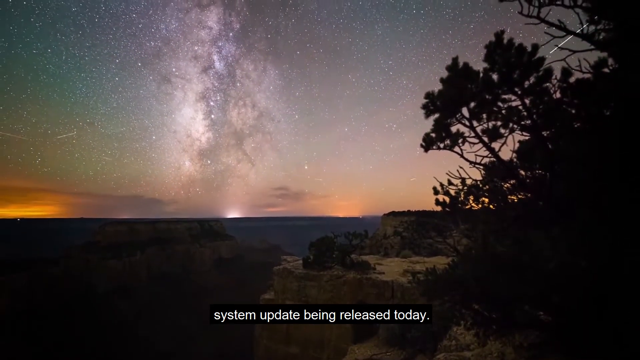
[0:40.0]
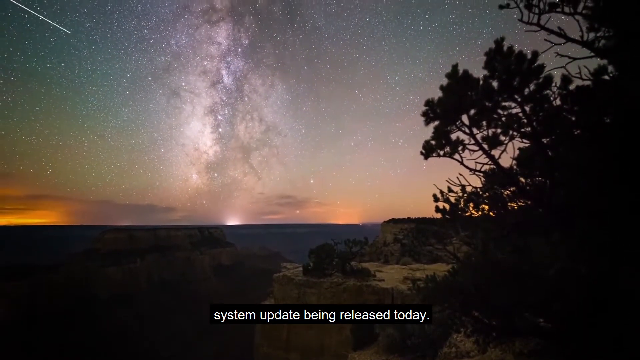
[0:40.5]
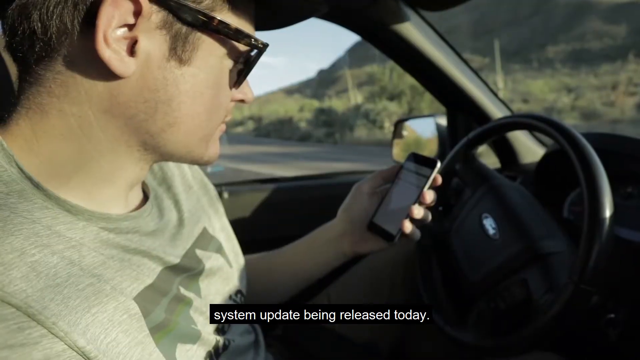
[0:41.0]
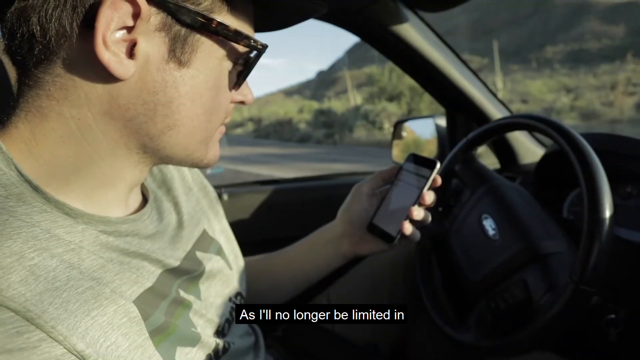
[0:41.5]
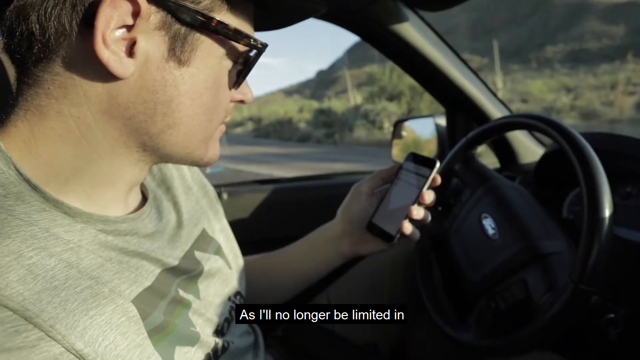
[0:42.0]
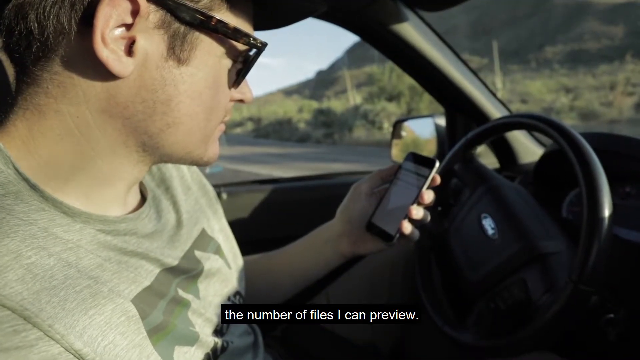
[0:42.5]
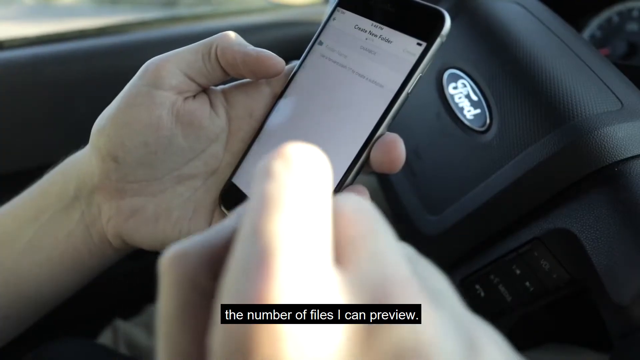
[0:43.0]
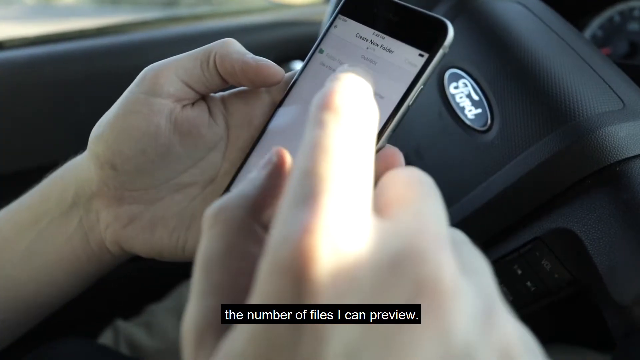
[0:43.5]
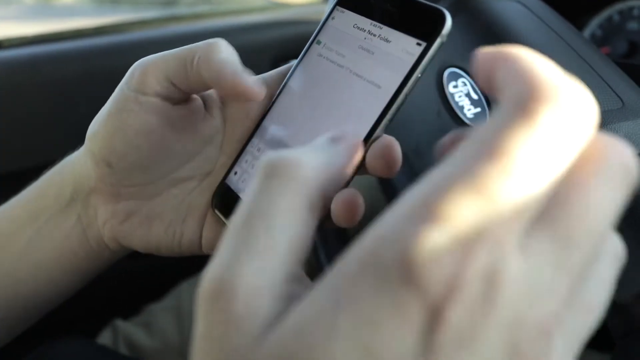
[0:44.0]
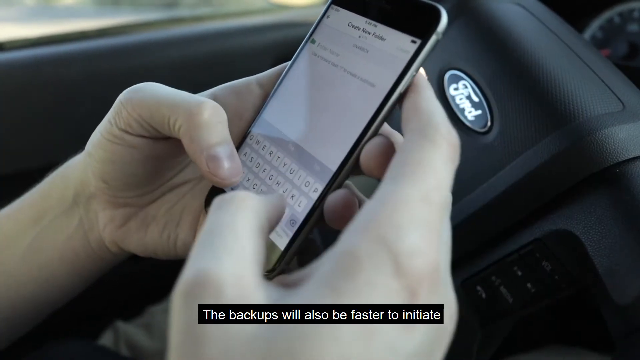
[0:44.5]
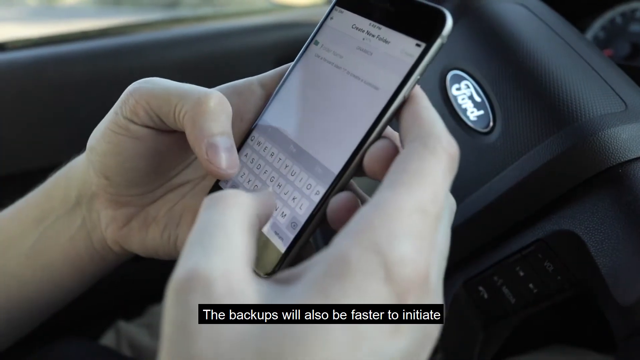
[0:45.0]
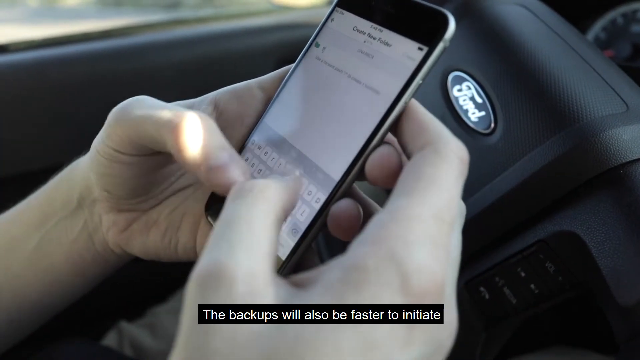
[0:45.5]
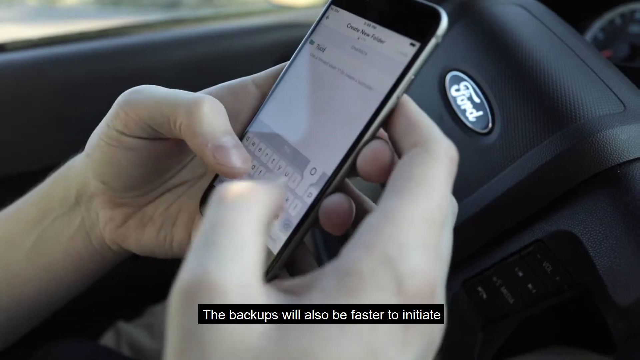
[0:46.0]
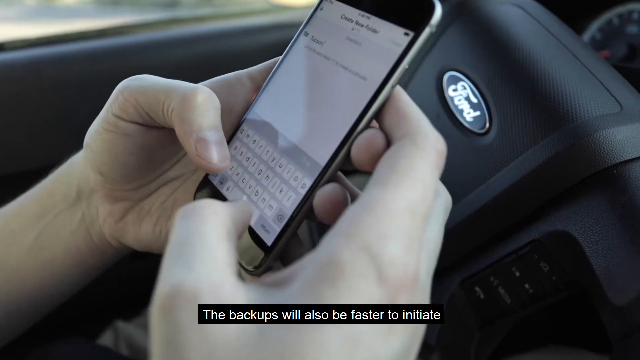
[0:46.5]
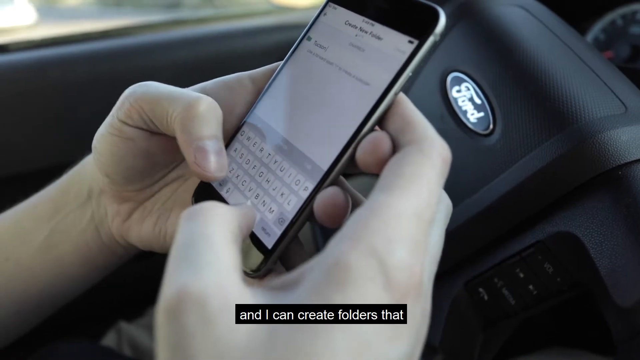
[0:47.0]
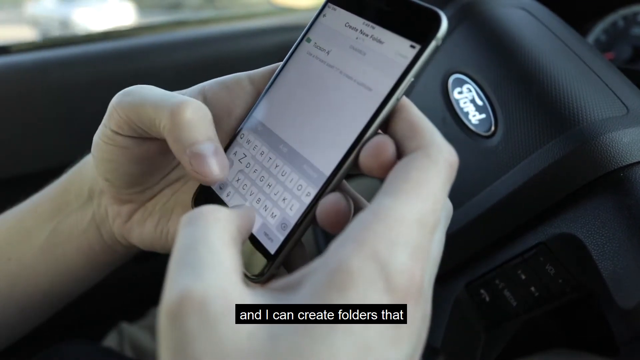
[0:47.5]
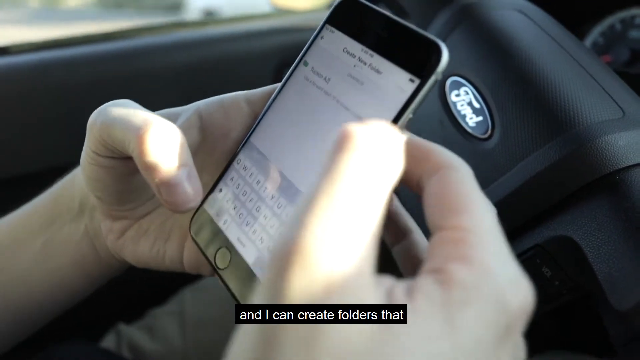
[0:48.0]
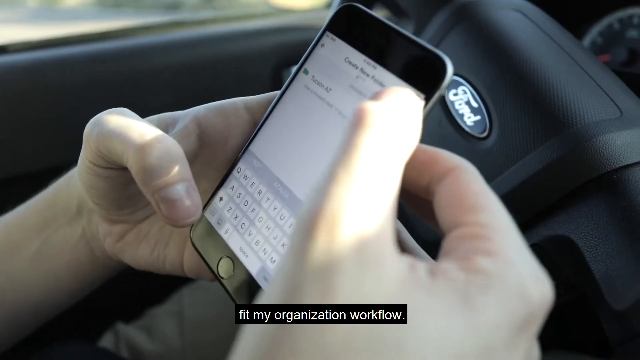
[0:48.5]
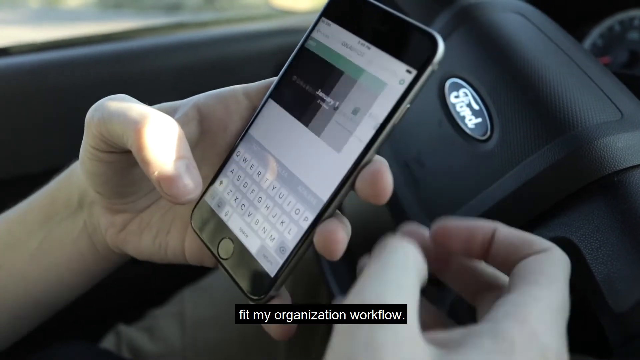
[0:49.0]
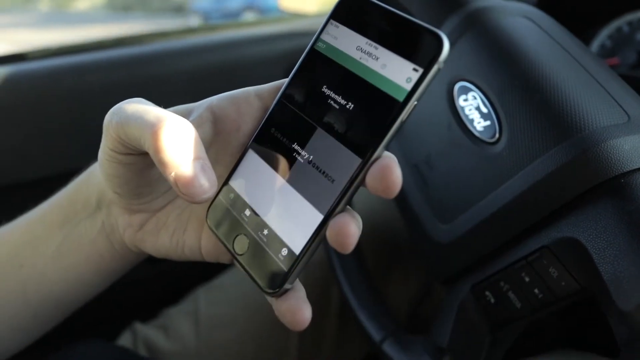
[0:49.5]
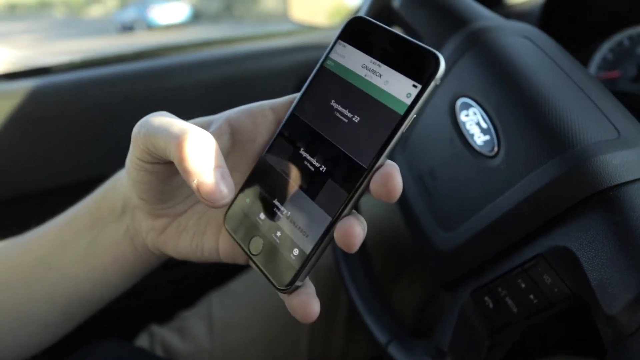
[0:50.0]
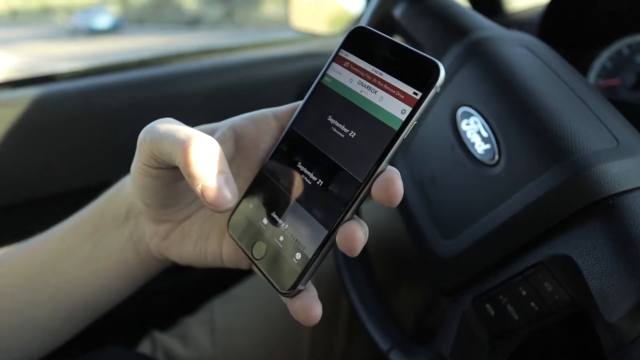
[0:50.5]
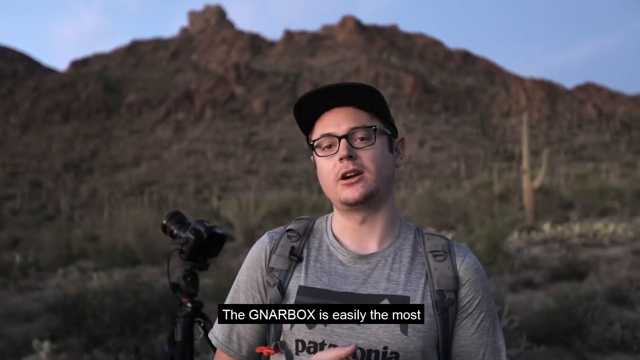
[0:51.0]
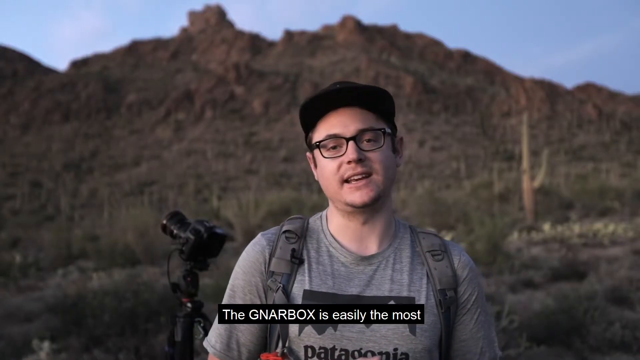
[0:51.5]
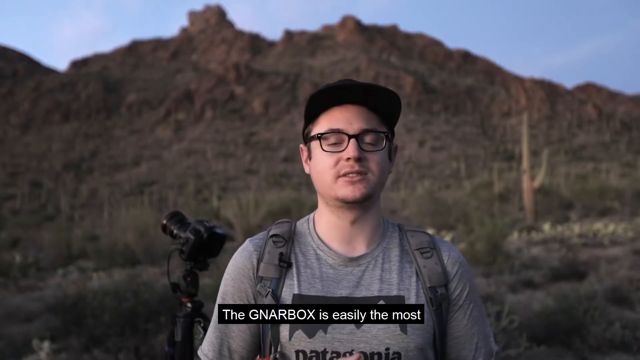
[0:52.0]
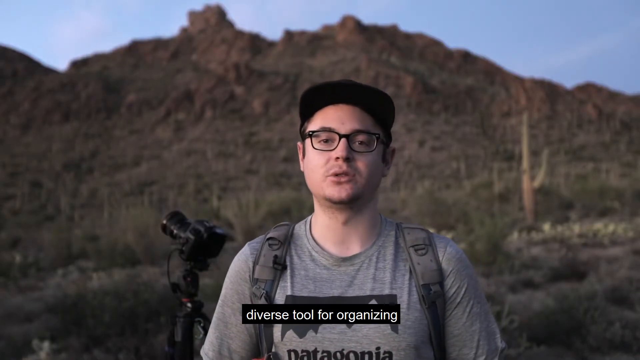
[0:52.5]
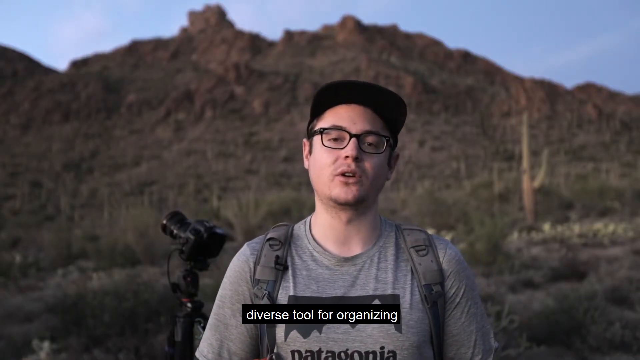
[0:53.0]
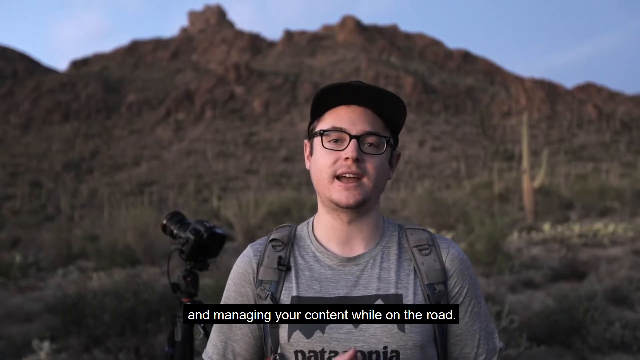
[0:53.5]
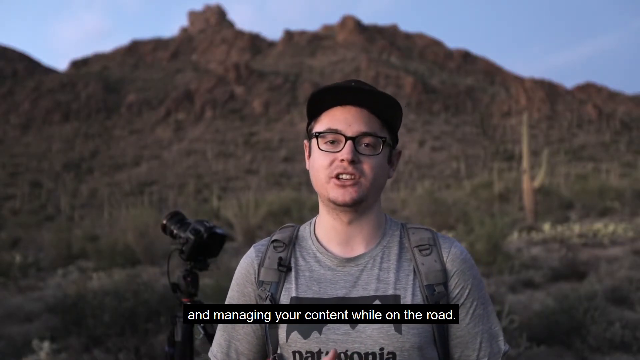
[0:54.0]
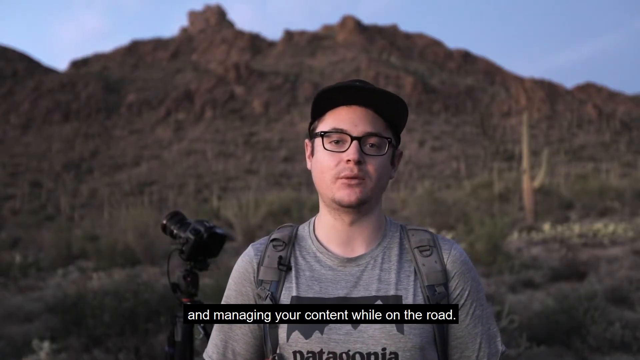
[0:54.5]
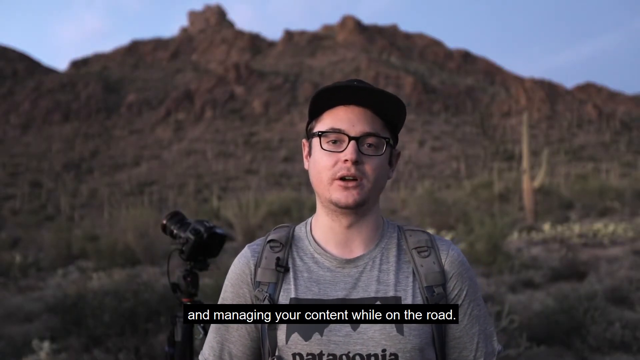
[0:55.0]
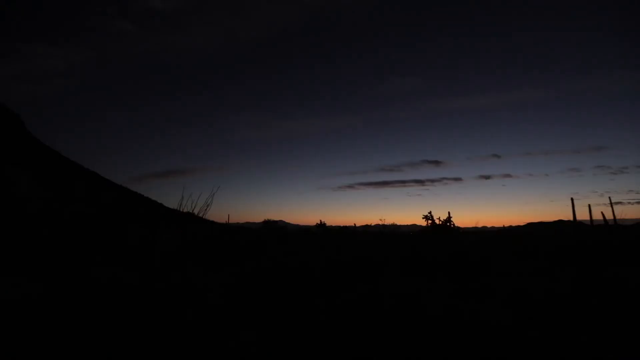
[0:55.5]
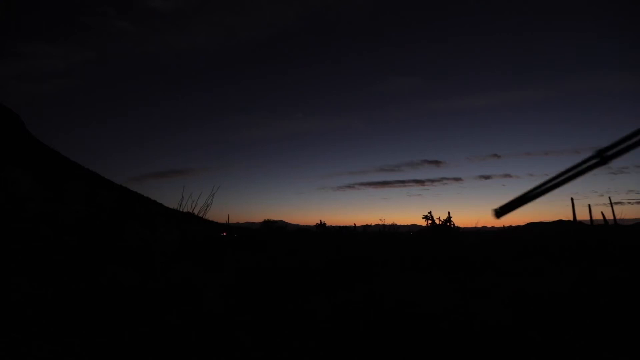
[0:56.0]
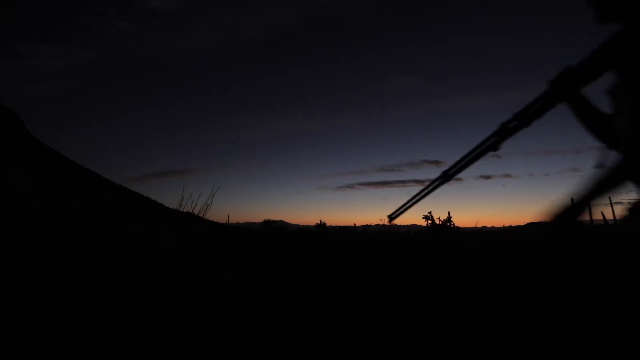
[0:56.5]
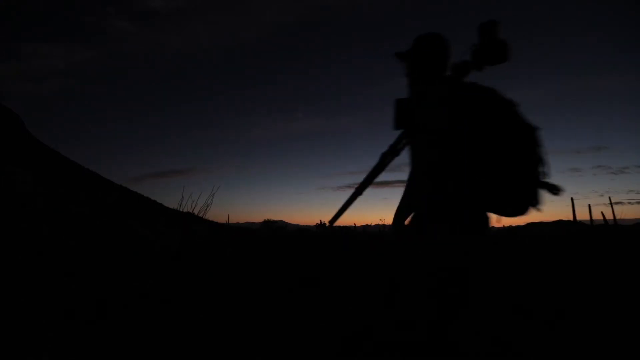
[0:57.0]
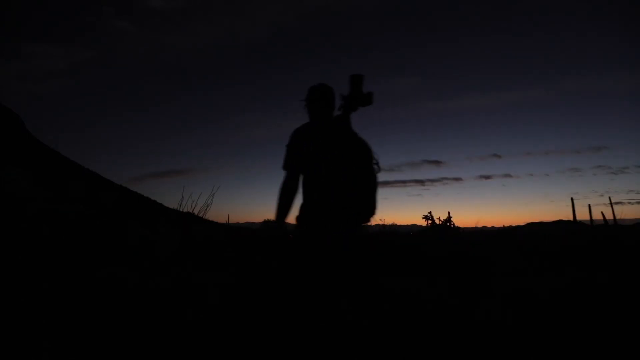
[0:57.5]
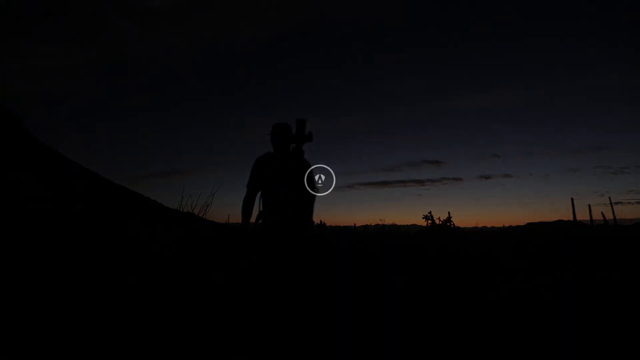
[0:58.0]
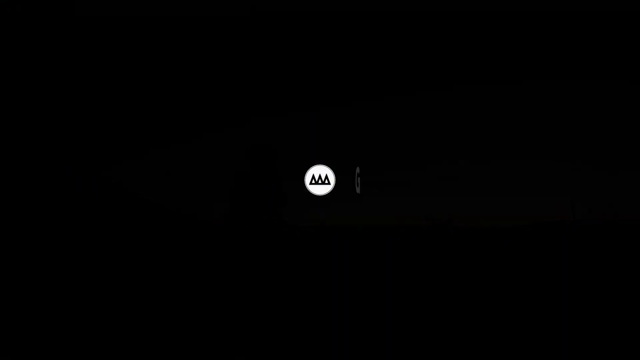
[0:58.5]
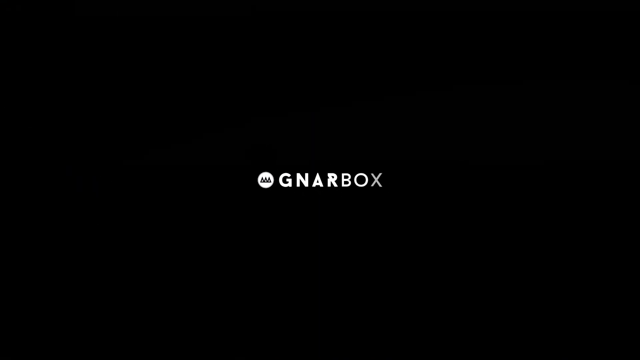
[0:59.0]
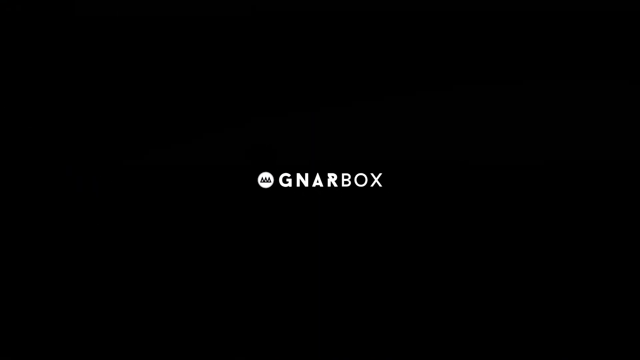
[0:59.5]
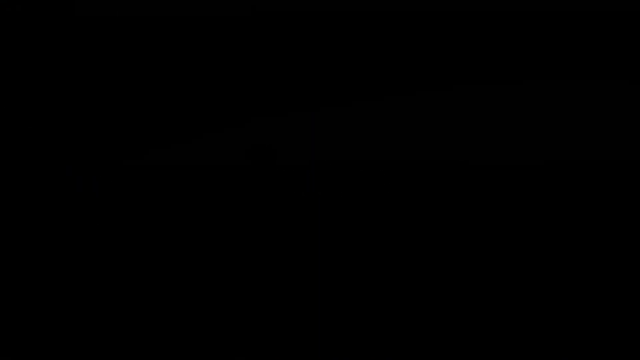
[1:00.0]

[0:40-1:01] Sean Parker sits in his car wearing sunglasses, looking at his phone. He scrolls through the phone and looks to be setting up a folder for the photos he takes on the road. He says the backups will initiate faster, so his organization workflow can get better. He then speaks about the Gnarbox with the mountains in the background and the camera pointing upwards in the background as well. The video ends with a night shot of Parker walking towards the sunset with a tripod in his hand and on his shoulder.